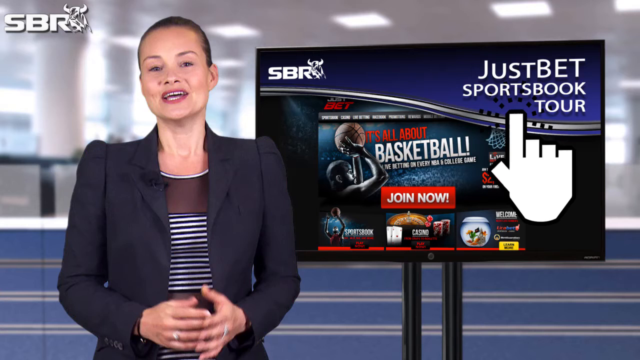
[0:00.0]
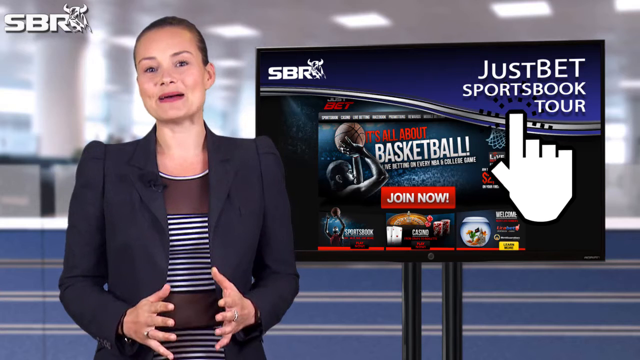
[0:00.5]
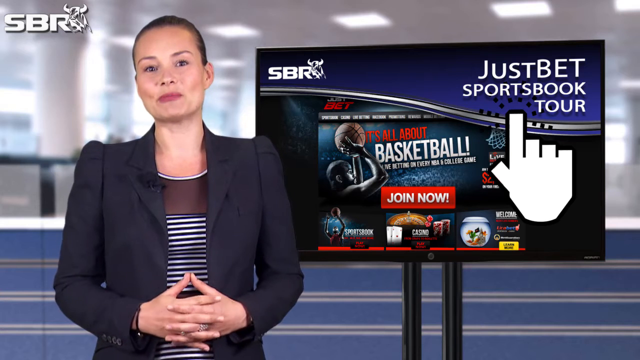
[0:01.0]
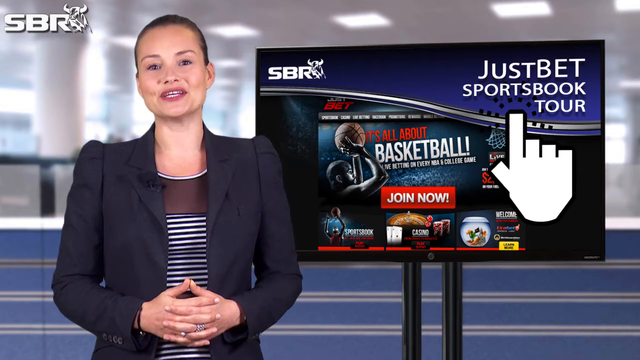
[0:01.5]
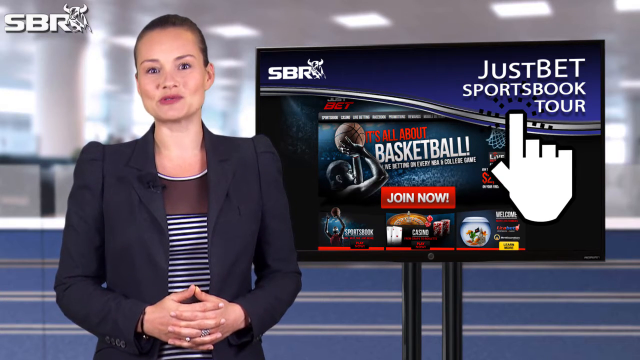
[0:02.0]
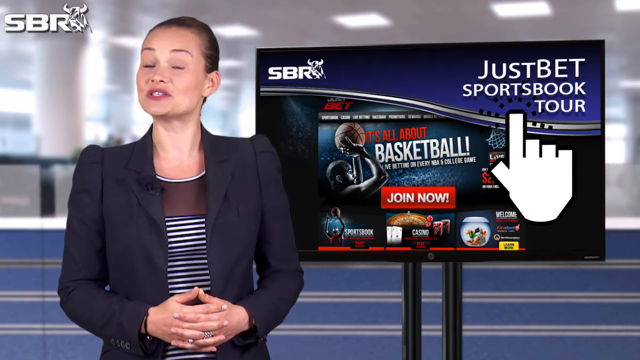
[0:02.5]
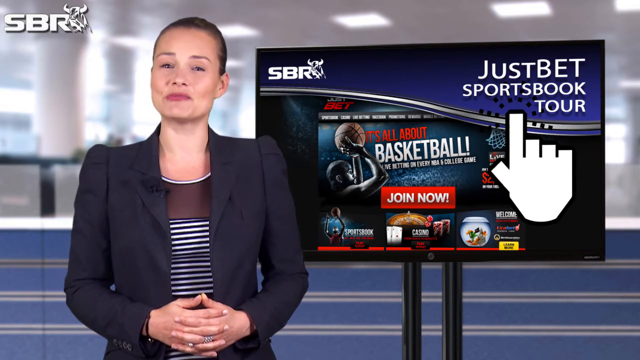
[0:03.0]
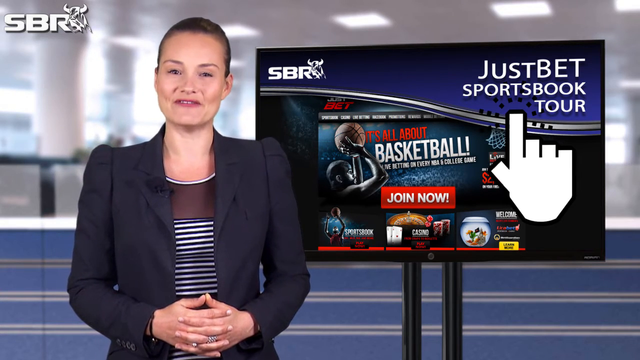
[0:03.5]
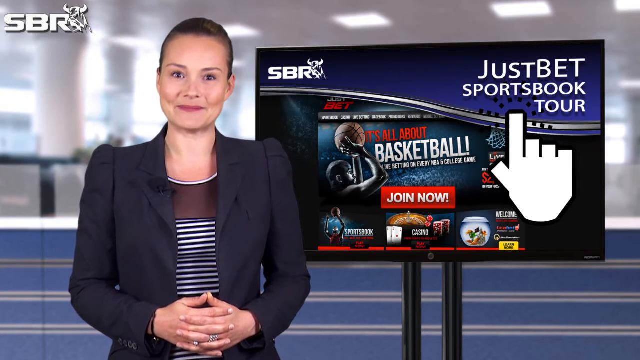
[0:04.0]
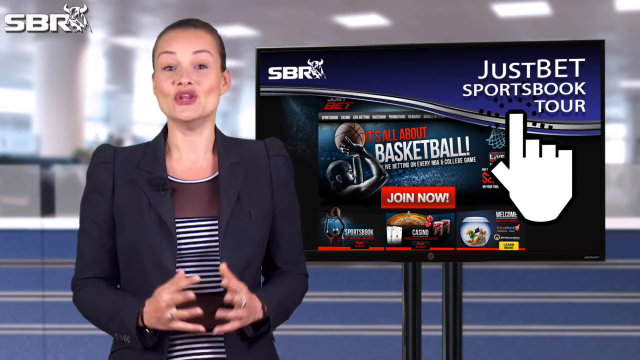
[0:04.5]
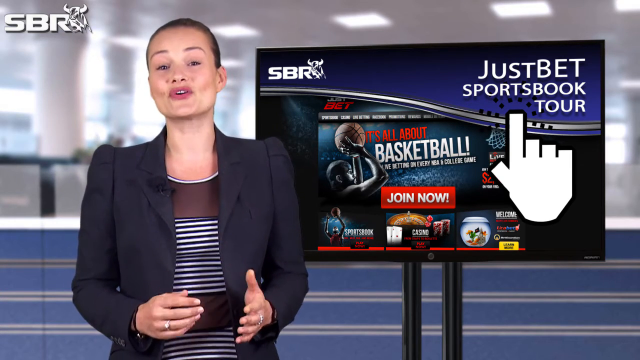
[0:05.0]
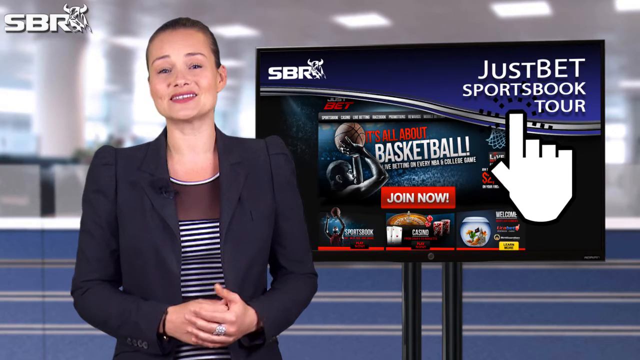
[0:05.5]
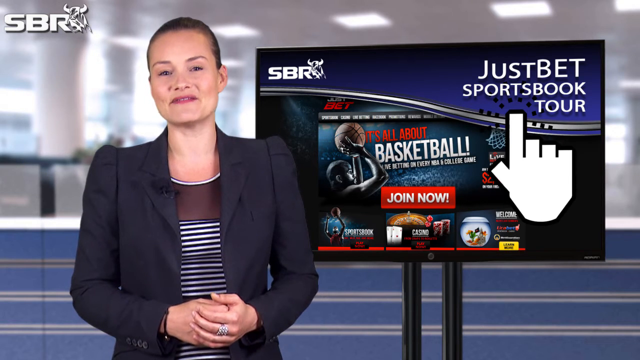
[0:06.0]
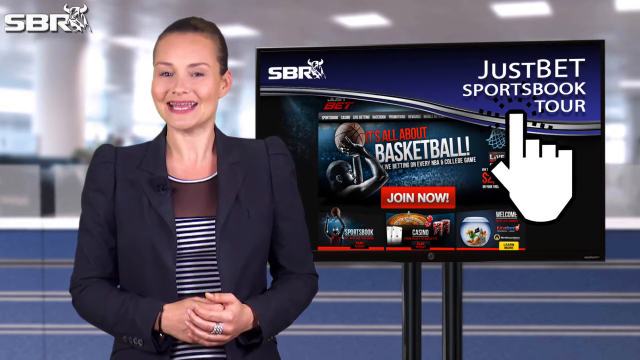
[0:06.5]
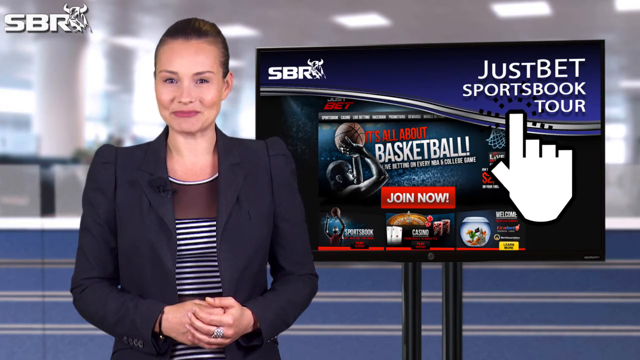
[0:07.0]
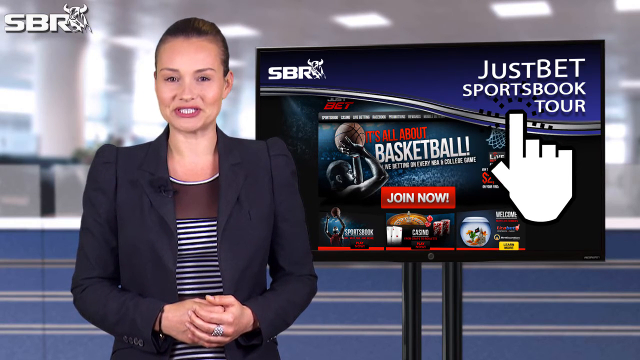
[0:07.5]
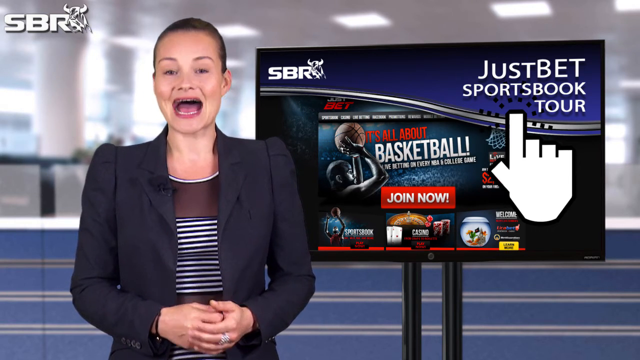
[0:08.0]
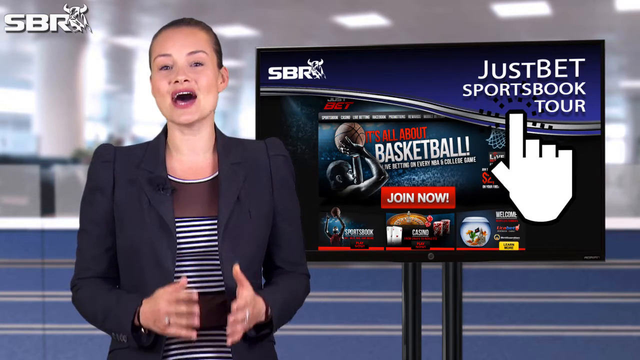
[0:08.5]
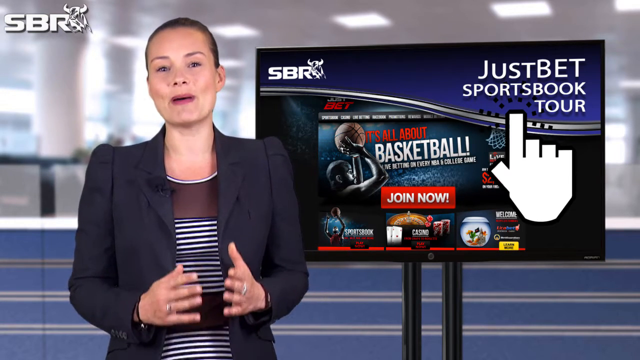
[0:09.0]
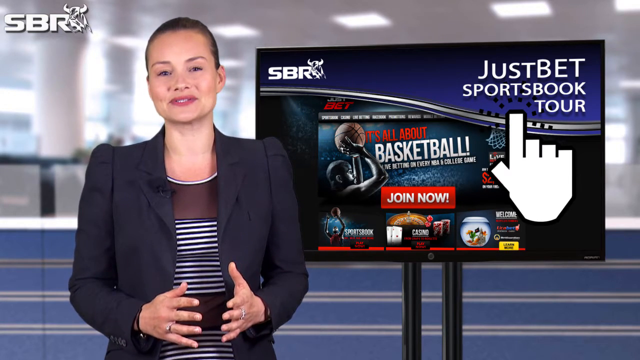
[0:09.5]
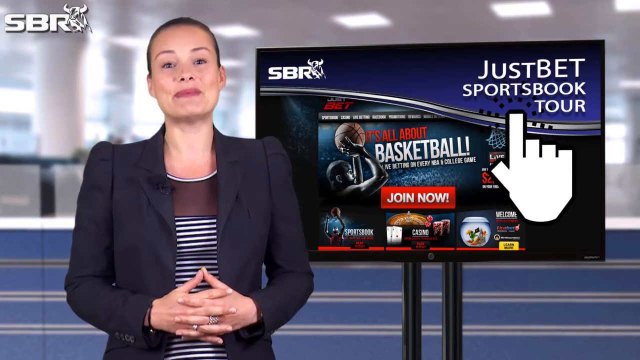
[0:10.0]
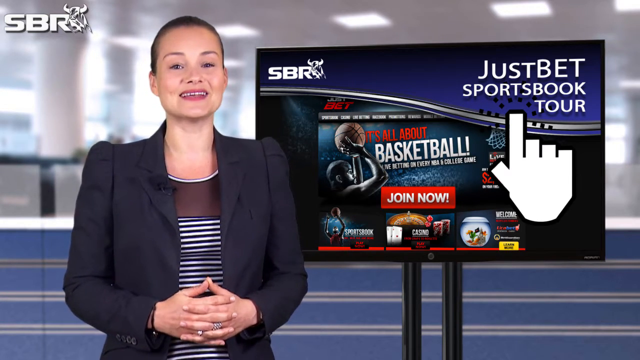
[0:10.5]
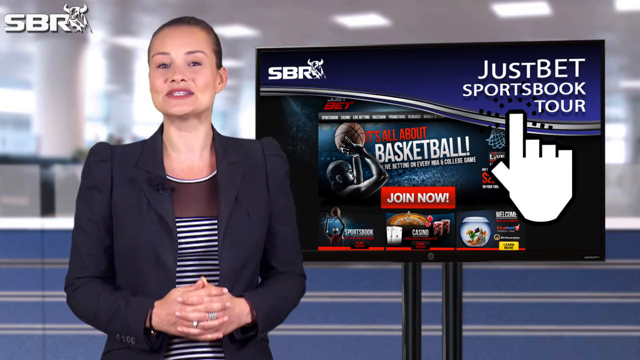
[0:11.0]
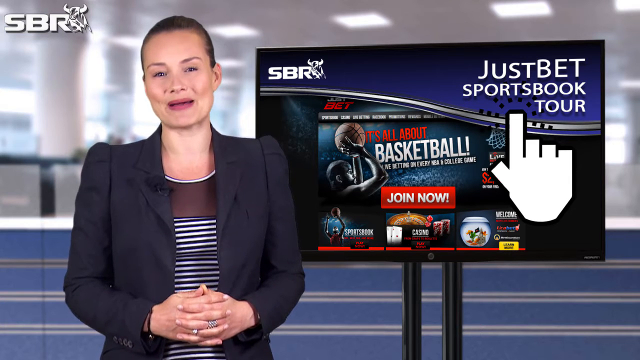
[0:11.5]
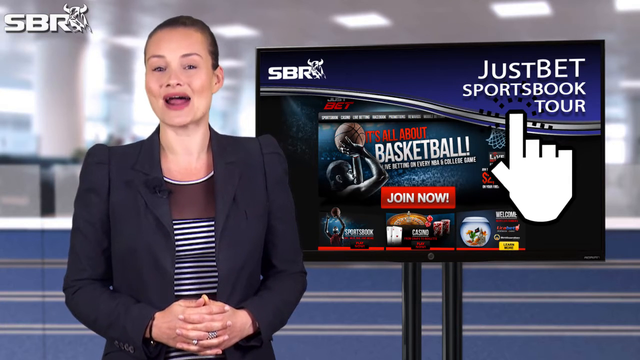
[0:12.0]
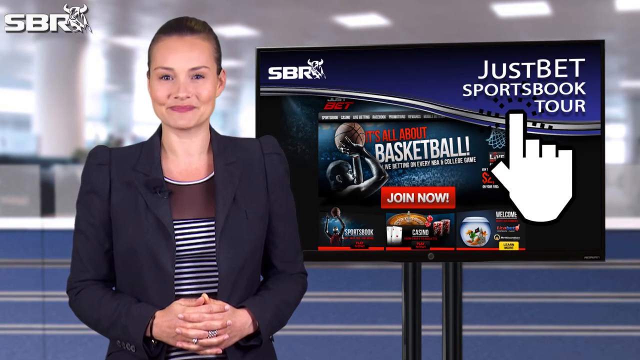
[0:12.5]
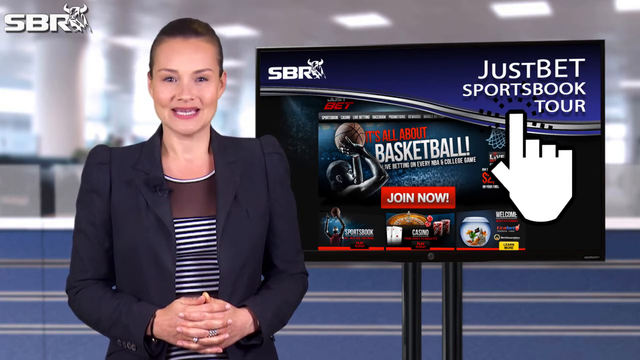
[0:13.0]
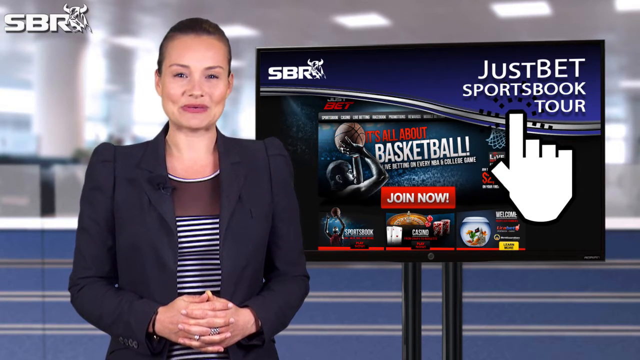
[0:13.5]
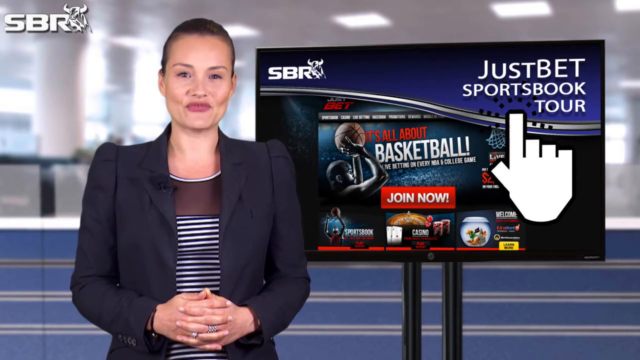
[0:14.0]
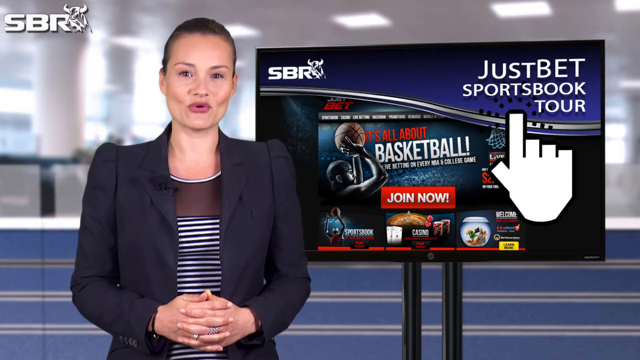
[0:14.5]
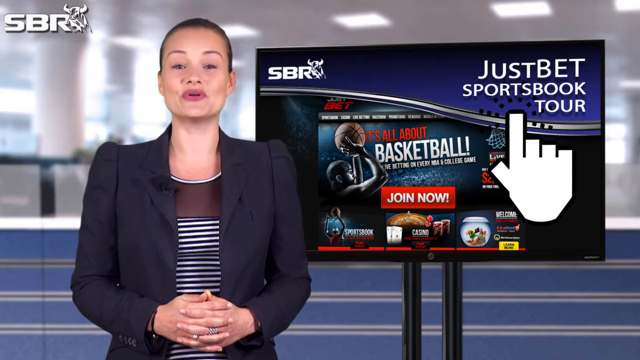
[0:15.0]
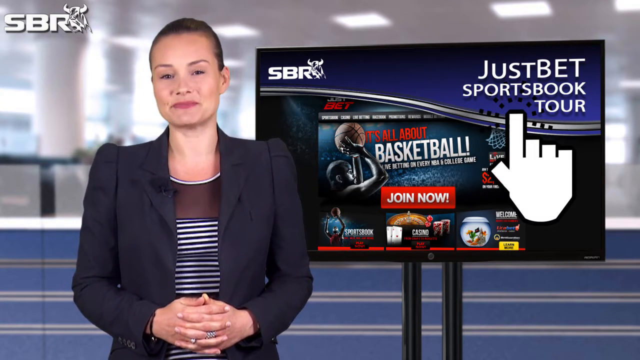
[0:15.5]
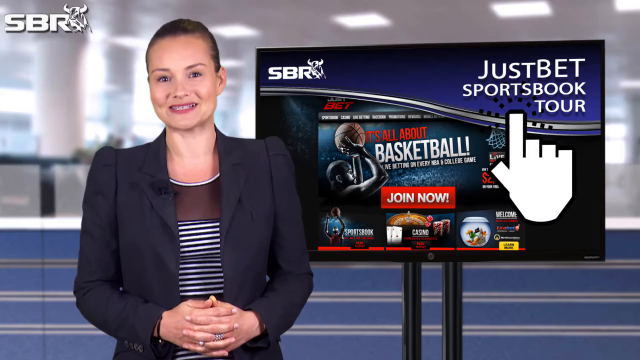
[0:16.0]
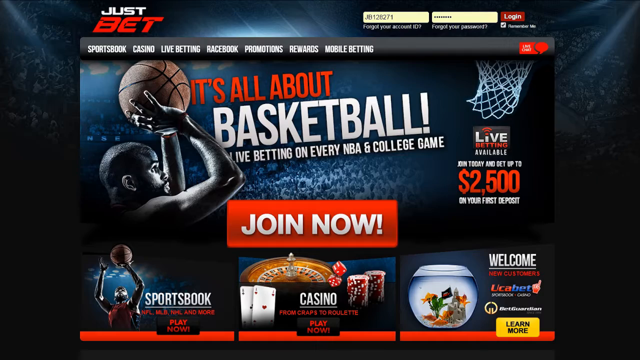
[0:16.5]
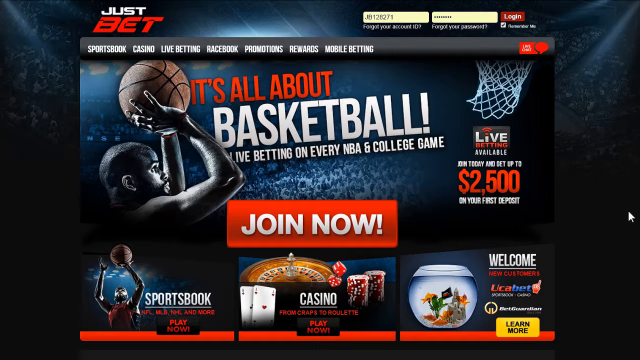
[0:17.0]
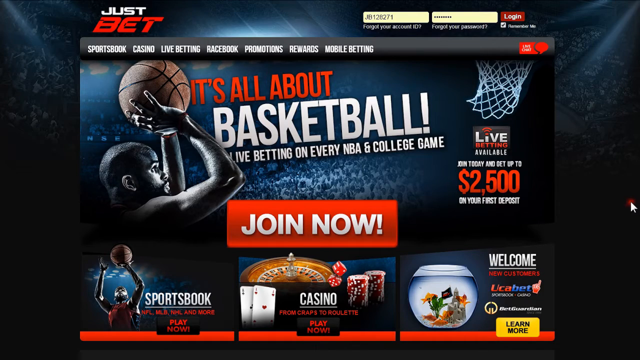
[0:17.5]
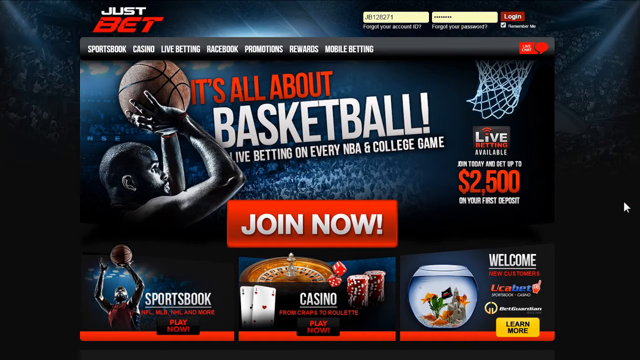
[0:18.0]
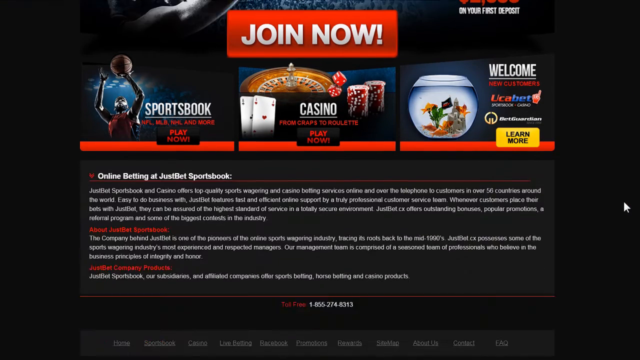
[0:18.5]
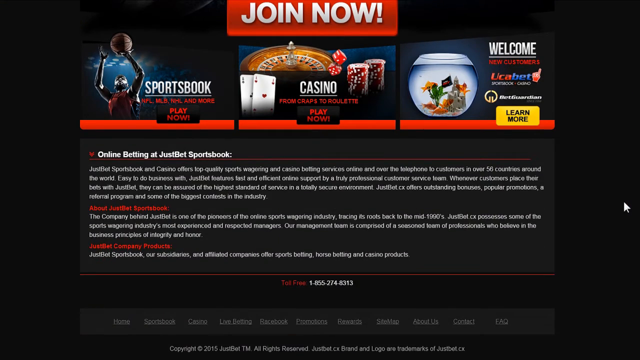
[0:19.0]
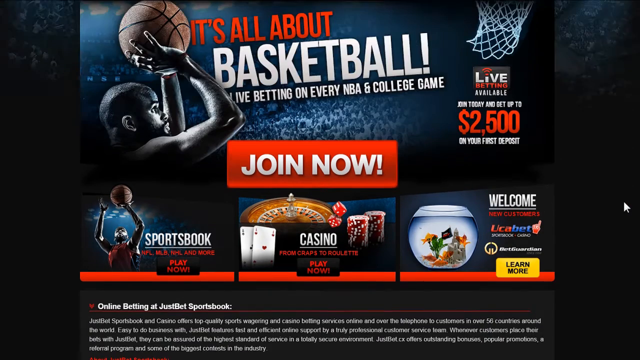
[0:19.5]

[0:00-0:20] A woman is speaking. "SBR" appears with a picture of a bull in the corner of the screen. She is in front of a monitor that shows the same thing in its left corner. Text reads "Just Bet Sportsbook Tour," and there is a picture of a white hand with the index finger pointing up. An image shows a basketball player shooting a basketball, and "join now" appears in a large red box. The view then moves to an up-close picture of the website, which shows "Just Bet" and a search bar. It says "live" along with an offer to join today and bet up to $2500 on the first deposit. On the right side there is a welcome sign with "Learn more" and a fishbowl. Casino images are in the middle, and "sportsbook" appears on the left with a person shooting a basketball.